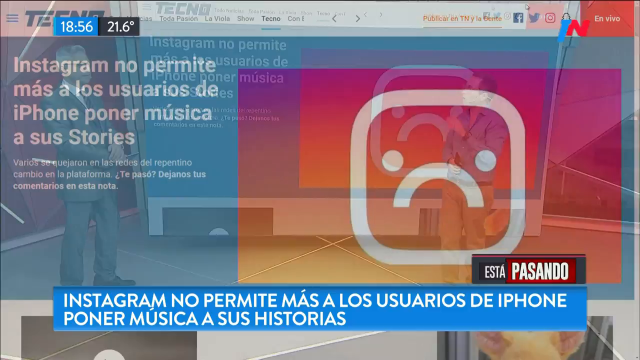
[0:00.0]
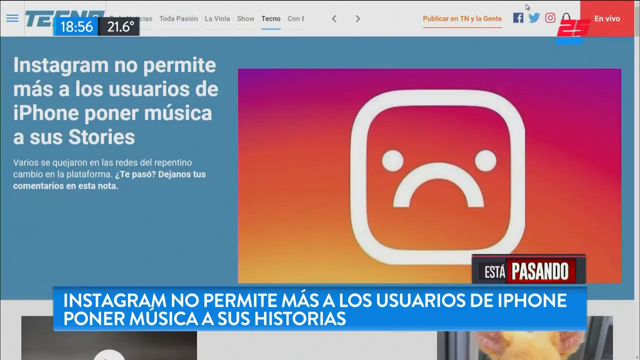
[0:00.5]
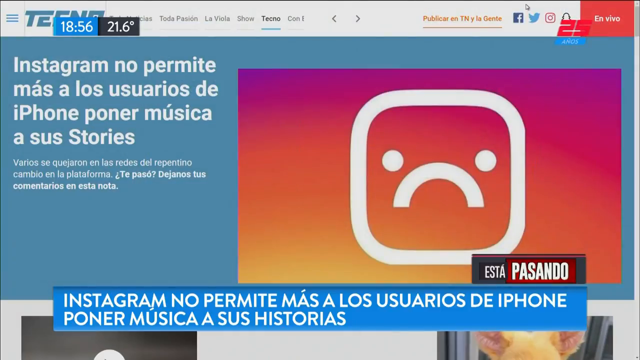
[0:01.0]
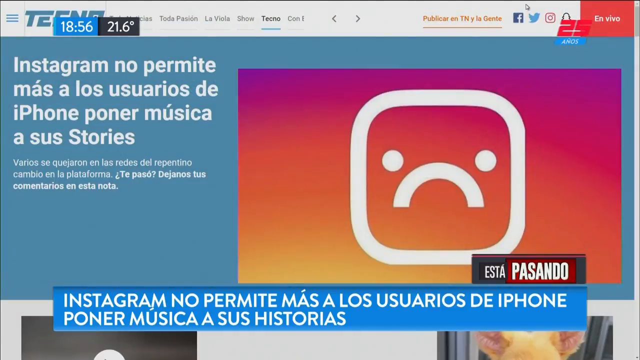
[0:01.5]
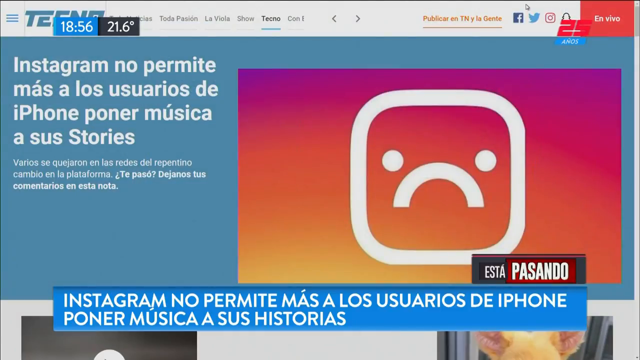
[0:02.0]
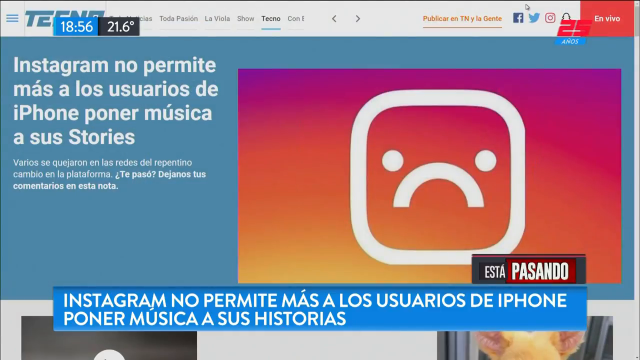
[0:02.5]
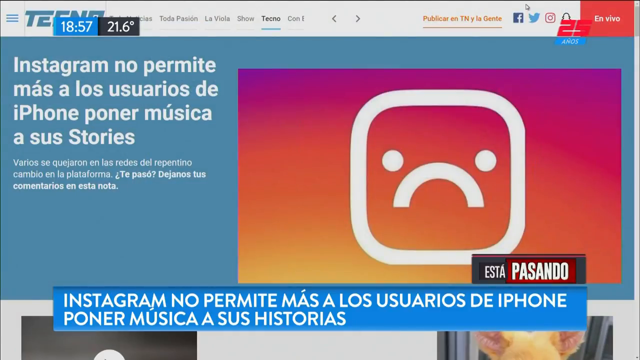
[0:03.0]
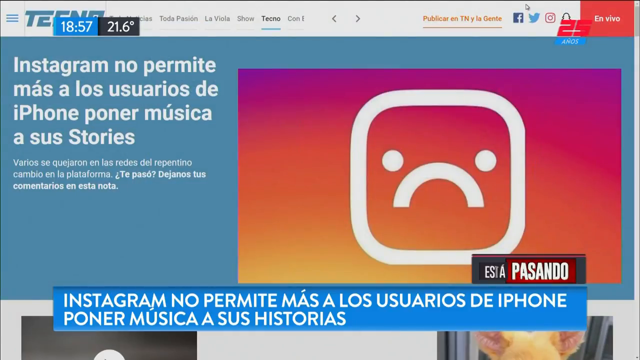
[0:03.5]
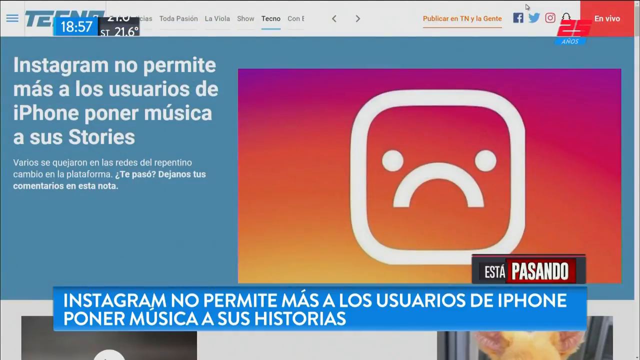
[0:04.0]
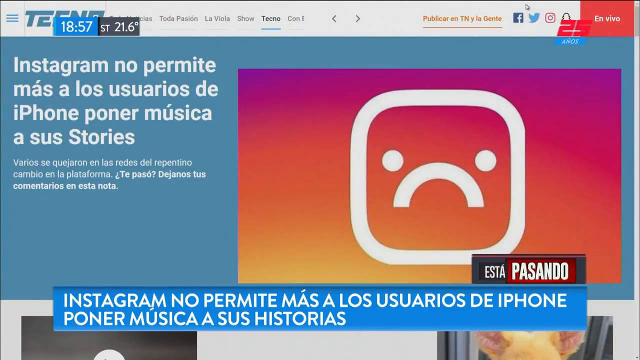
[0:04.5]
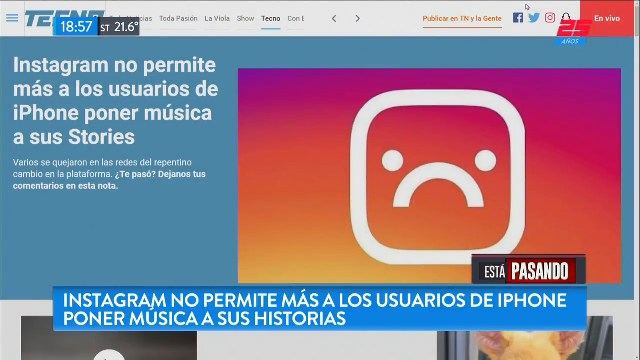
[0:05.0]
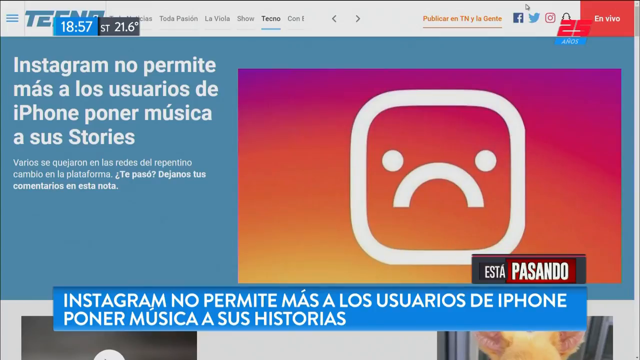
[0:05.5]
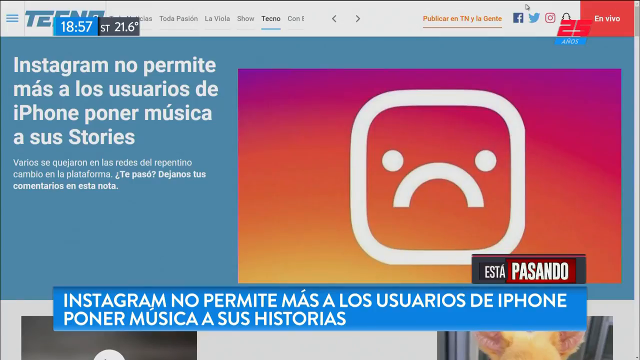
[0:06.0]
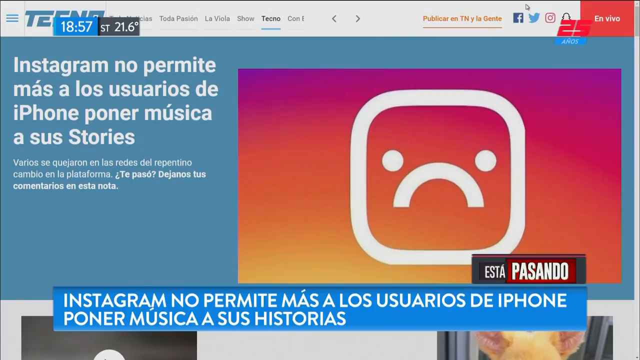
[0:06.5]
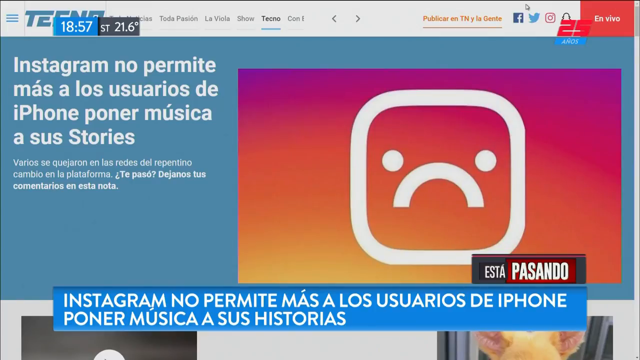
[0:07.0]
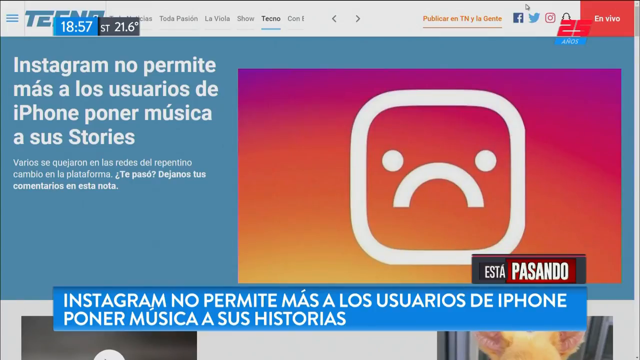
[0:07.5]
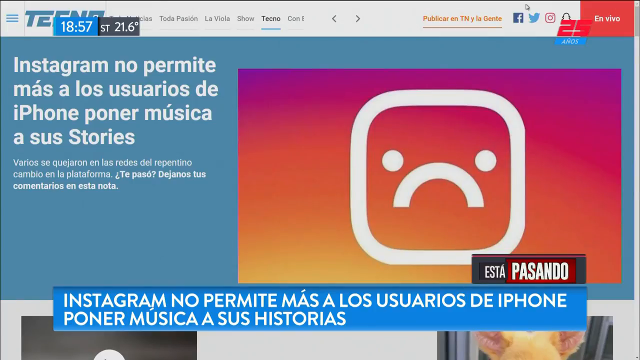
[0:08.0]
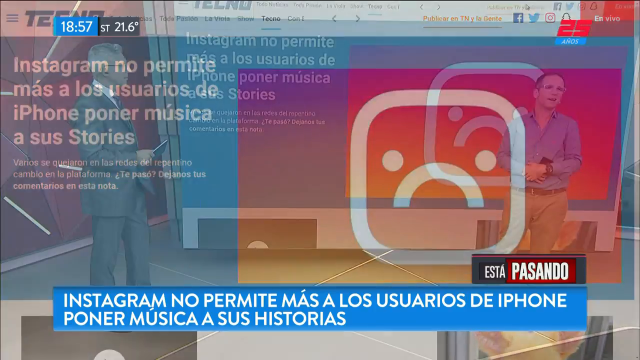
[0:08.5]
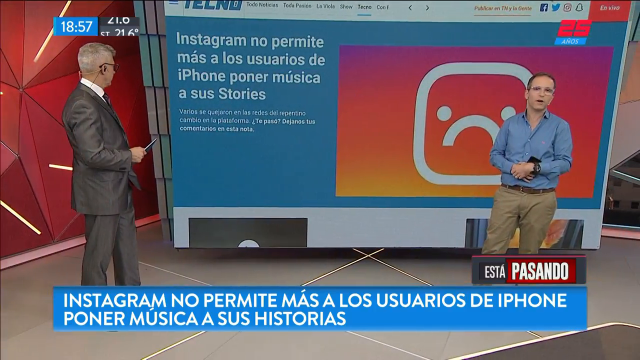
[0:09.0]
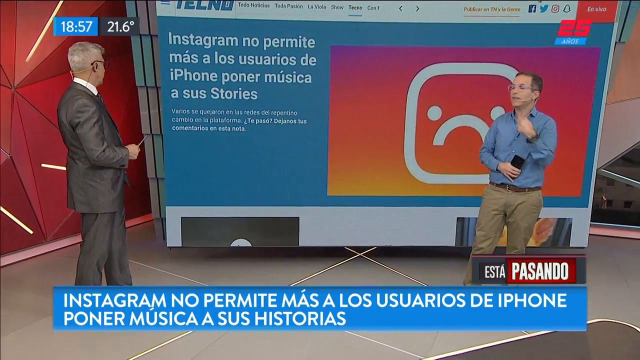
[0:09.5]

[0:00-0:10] A news story appears against a blue background. On the right is an image resembling a knockoff of the Instagram logo turned into a smiley-frowny face, using orange, red and white for the face. White lettering on the left, in Spanish, reads "Instagram no permite más a los usuarios de iPhone poner música a sus stories", meaning that Instagram is no longer allowing iPhone users to put music in their stories. This stays up for most of the shot. Then two men appear, one in a suit and one in khaki pants, a button-up shirt and glasses; they apparently are the ones presenting the story to the viewer.